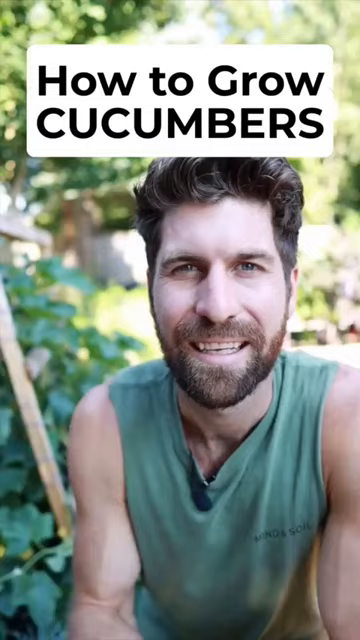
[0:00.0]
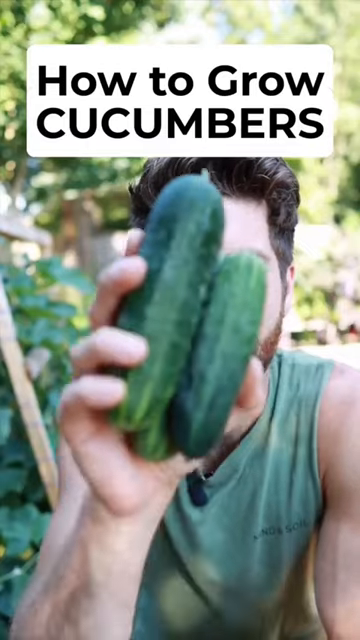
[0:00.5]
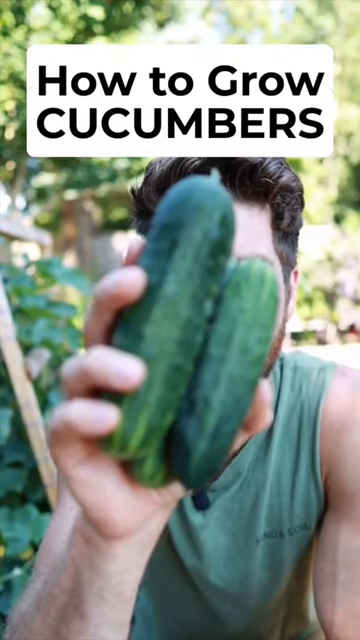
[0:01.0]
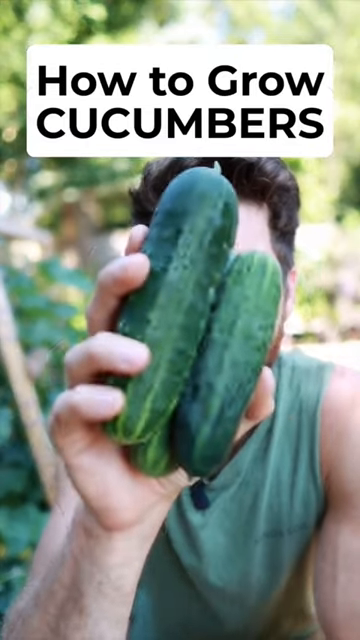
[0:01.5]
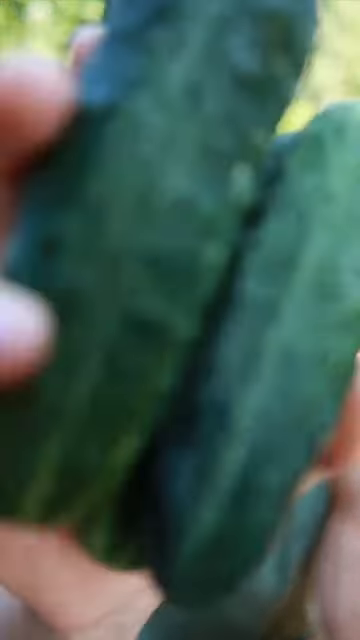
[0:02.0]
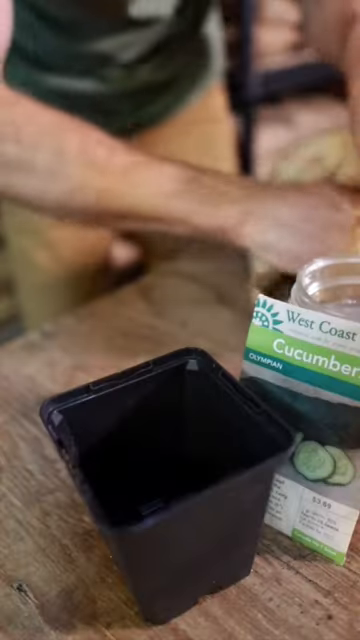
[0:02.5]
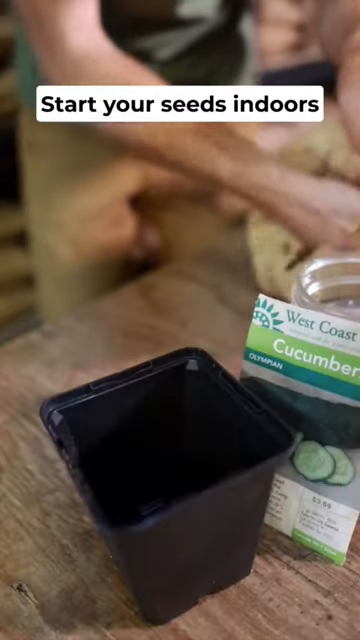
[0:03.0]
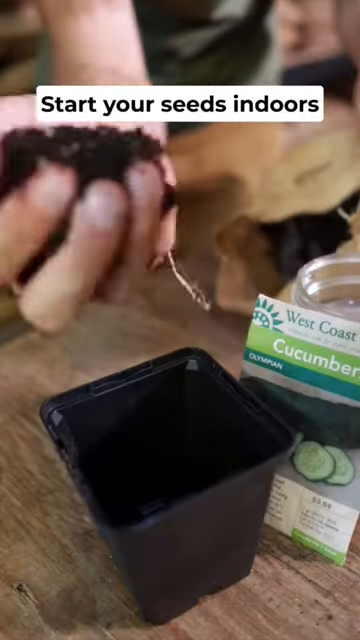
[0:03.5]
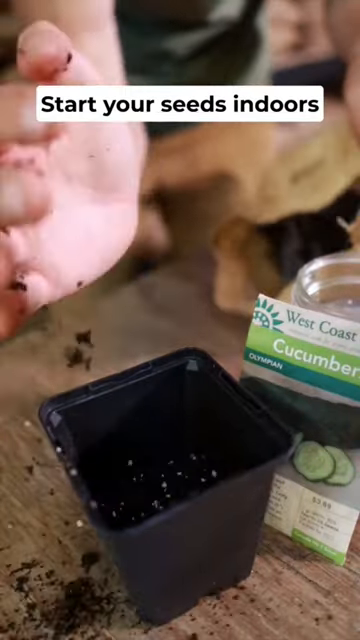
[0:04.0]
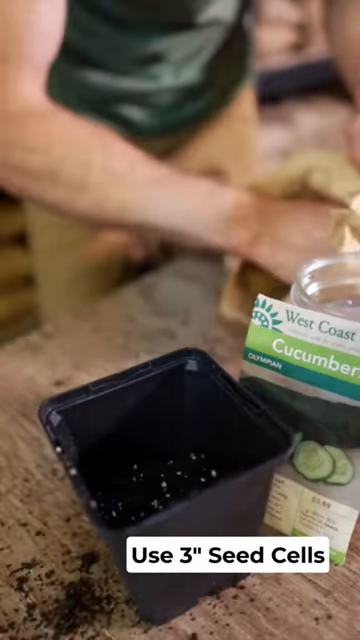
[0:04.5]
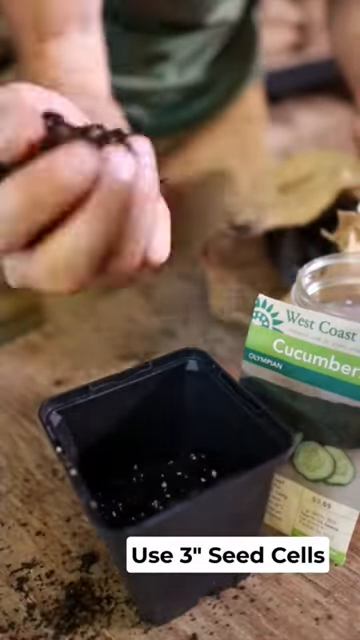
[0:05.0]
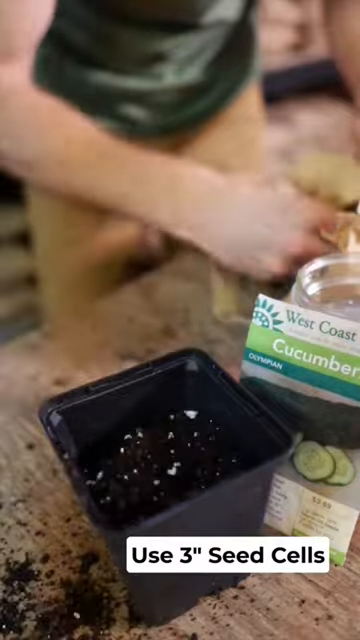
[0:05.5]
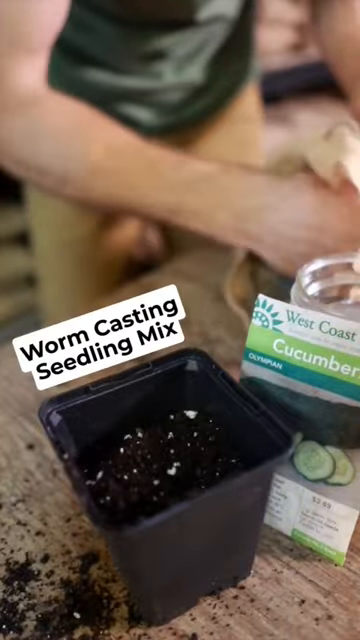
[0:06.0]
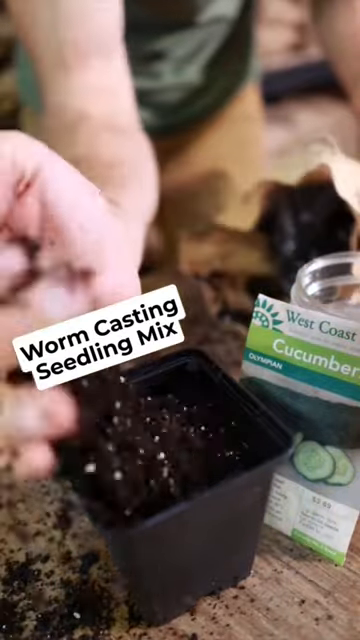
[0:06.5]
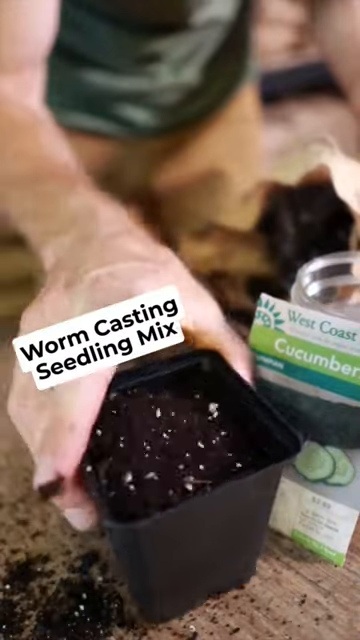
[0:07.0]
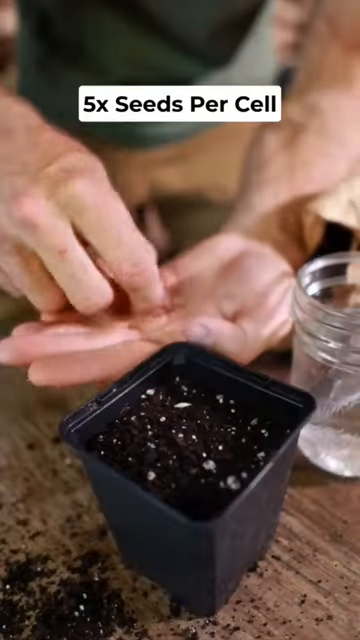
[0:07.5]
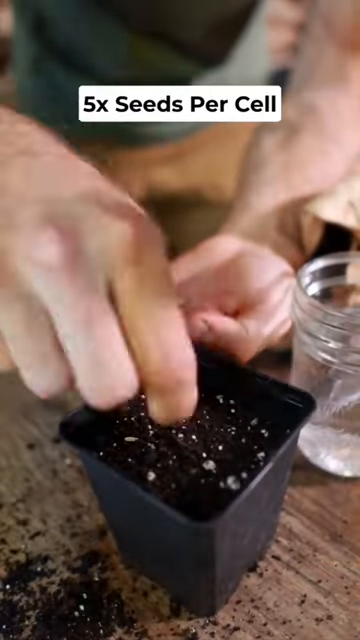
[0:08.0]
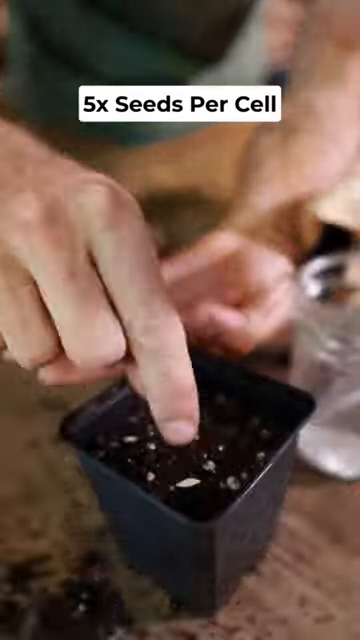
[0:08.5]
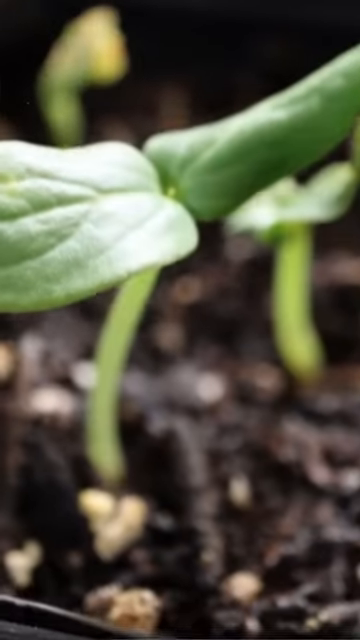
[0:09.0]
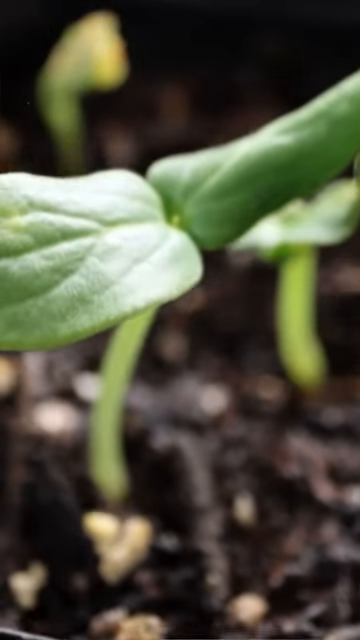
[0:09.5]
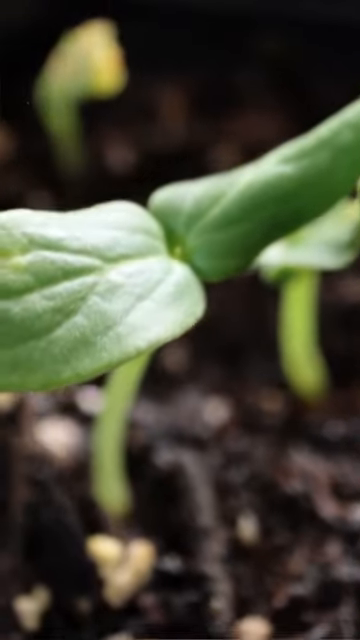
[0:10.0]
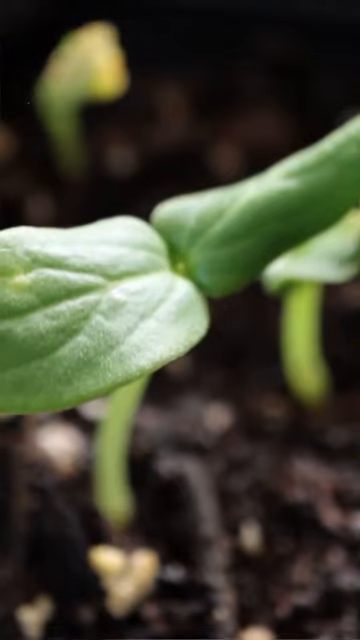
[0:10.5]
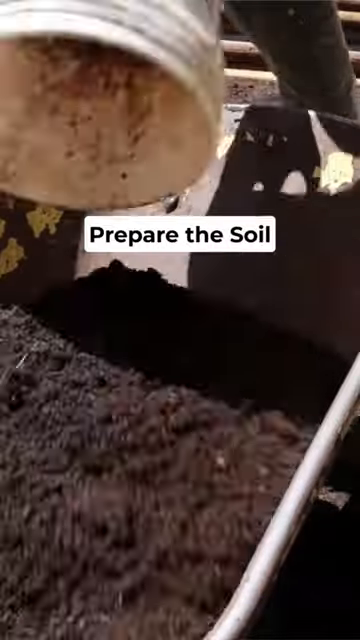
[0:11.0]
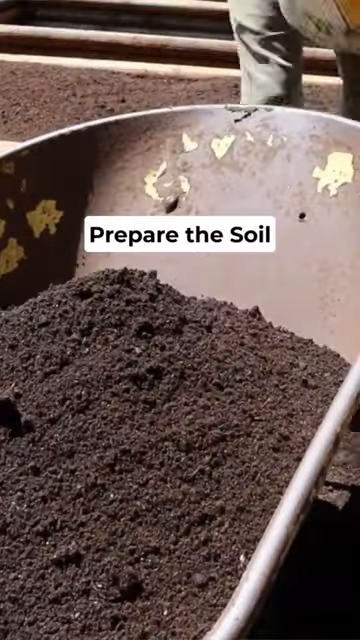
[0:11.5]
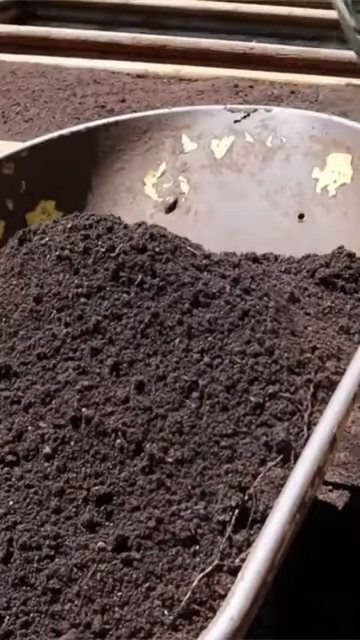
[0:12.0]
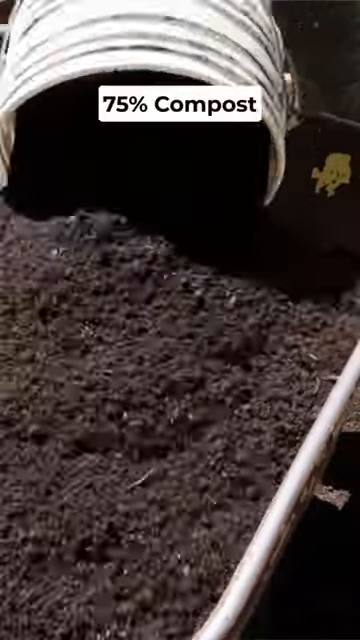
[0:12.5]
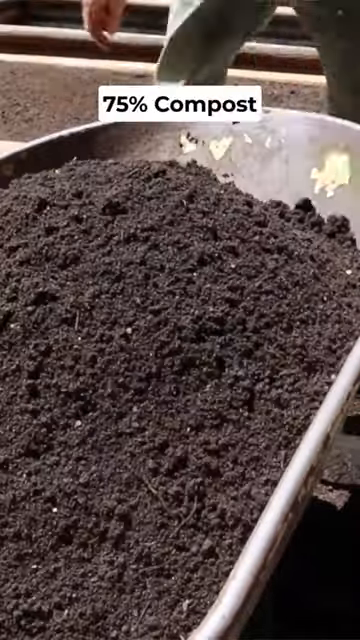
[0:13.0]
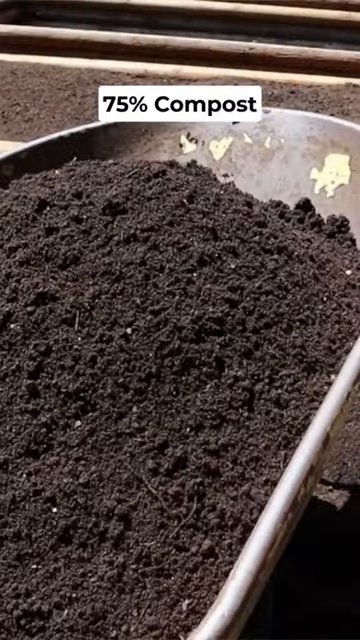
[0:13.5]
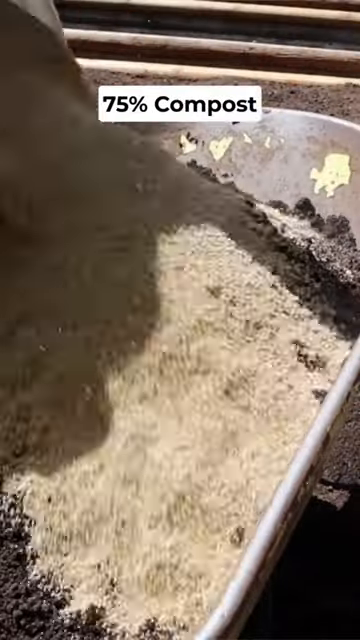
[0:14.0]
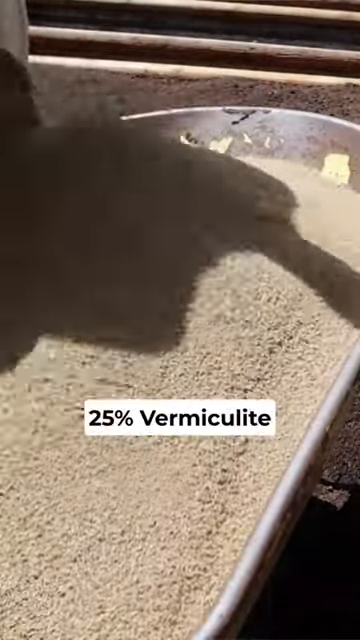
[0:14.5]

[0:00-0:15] Soil is put into pots, with about five seeds placed in each pot. The soil in the little pots is a worm casting type soil, and the pots look like they are three-inch pots. A compost is mixed from vermiculite and some black soil. Some seedlings are sprouting.